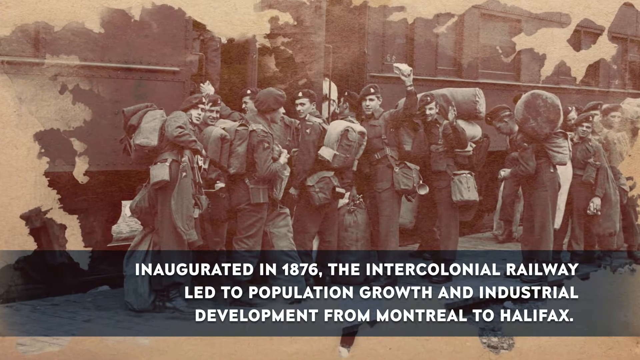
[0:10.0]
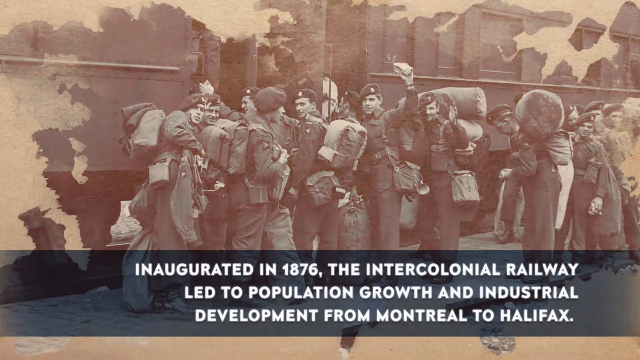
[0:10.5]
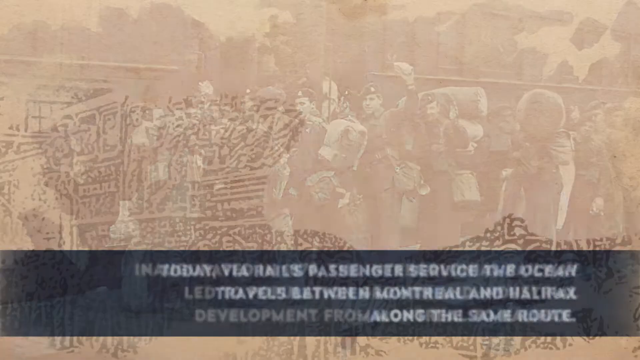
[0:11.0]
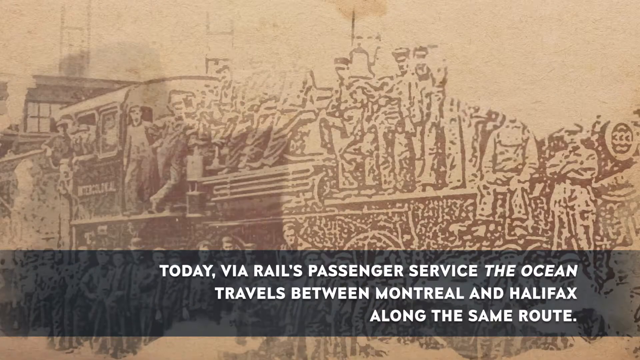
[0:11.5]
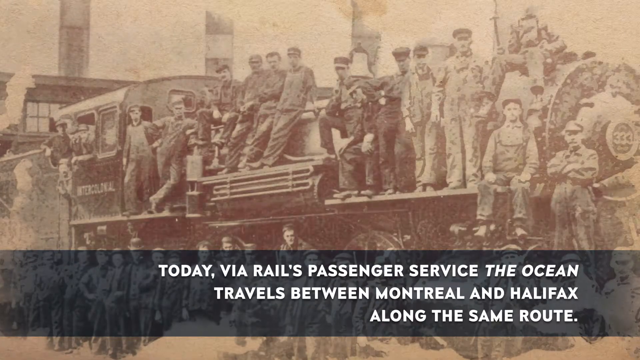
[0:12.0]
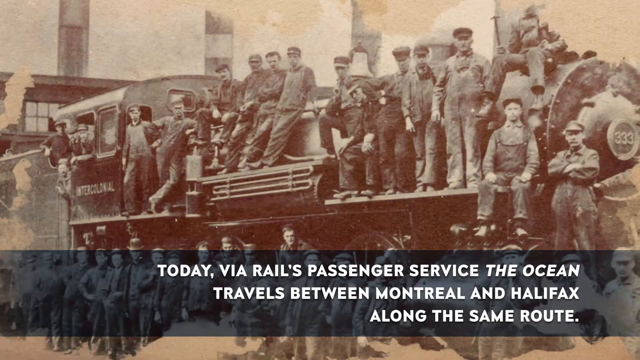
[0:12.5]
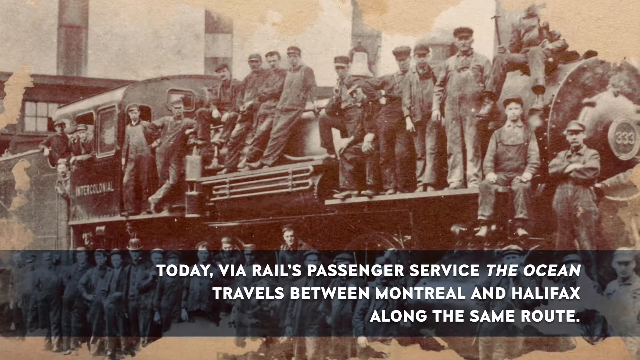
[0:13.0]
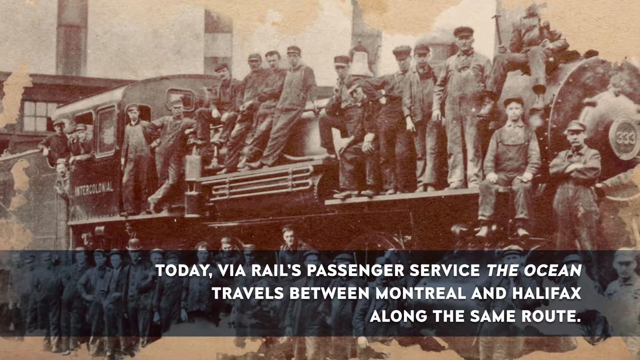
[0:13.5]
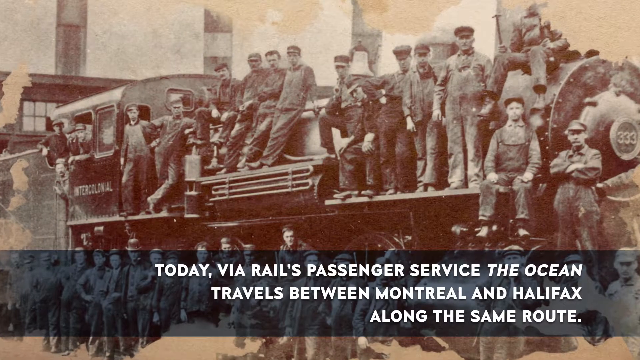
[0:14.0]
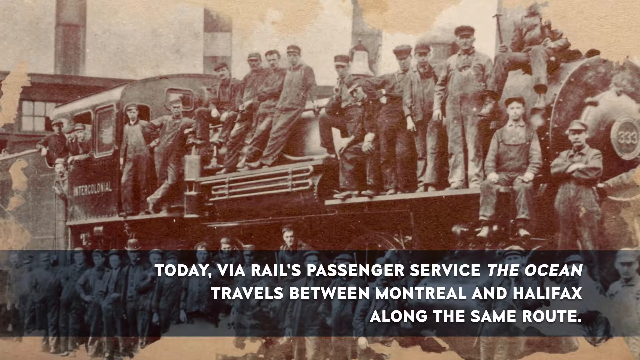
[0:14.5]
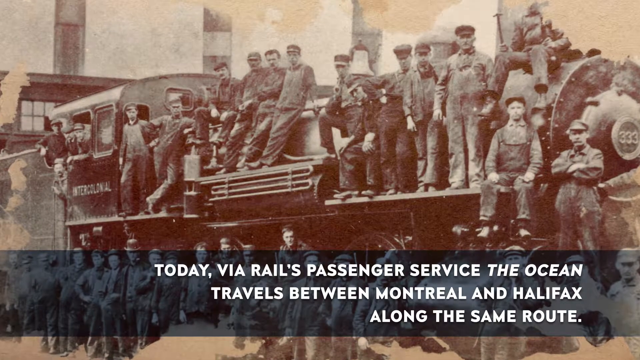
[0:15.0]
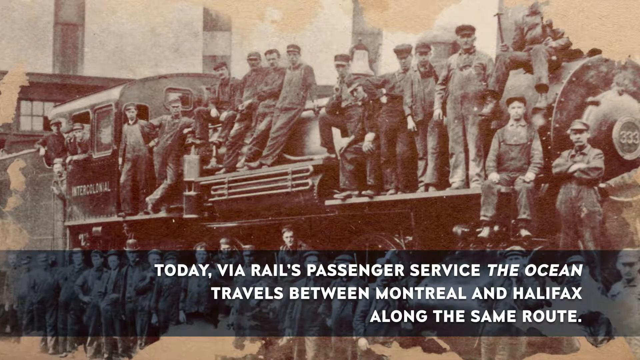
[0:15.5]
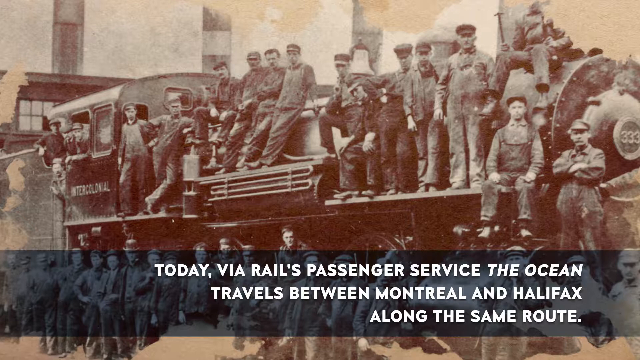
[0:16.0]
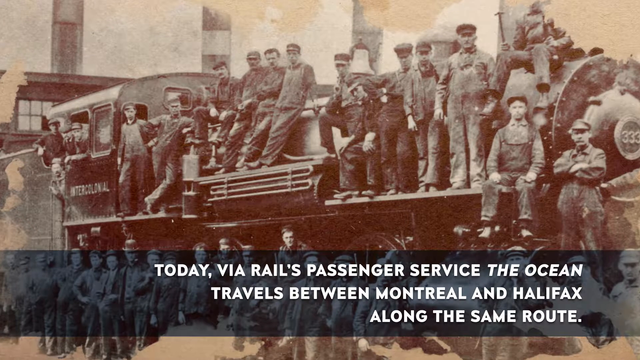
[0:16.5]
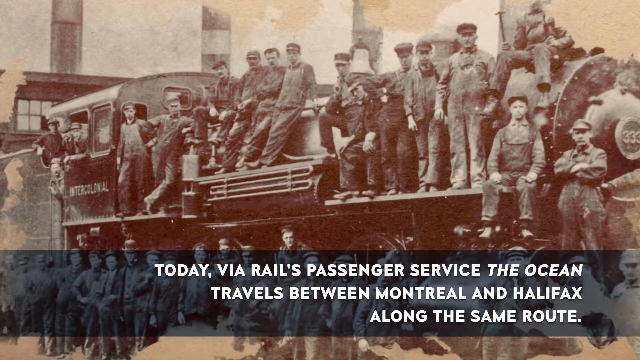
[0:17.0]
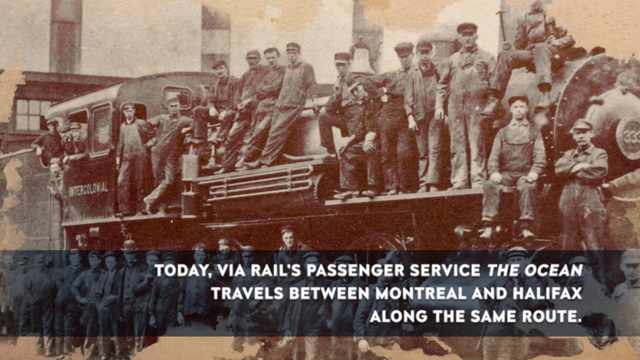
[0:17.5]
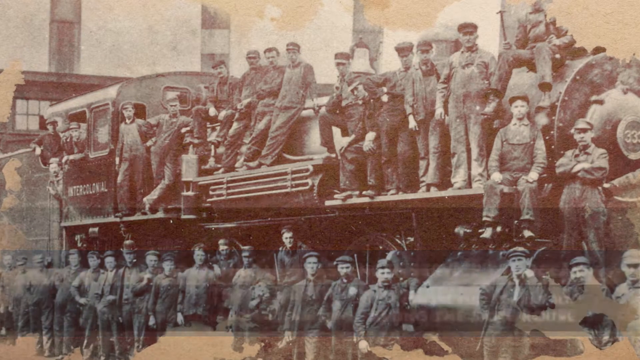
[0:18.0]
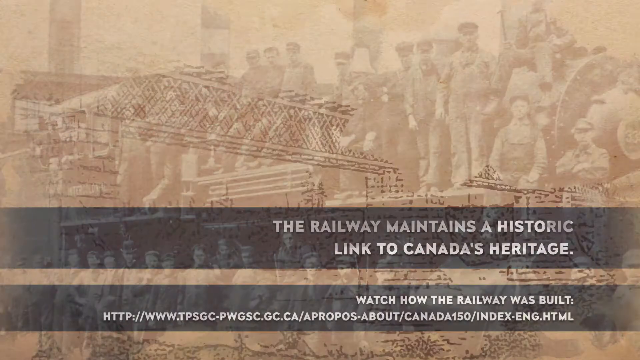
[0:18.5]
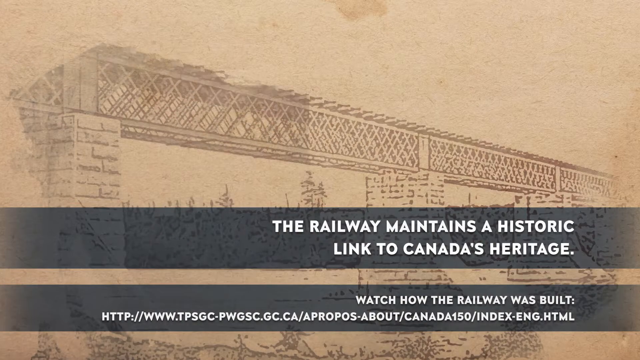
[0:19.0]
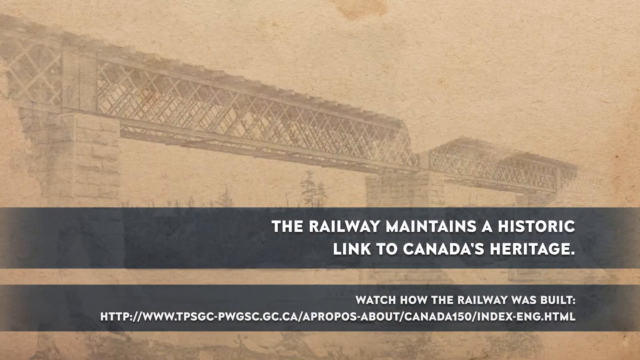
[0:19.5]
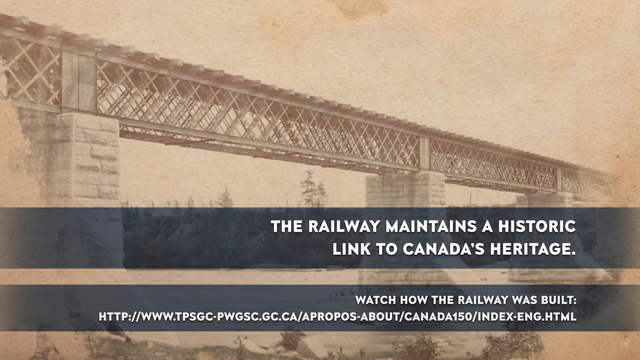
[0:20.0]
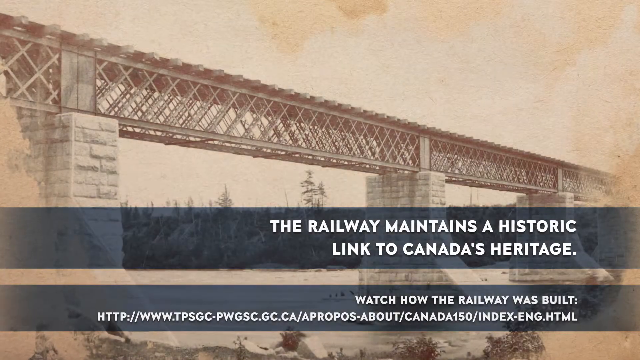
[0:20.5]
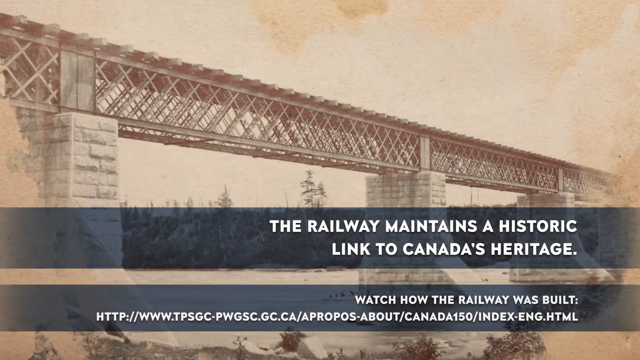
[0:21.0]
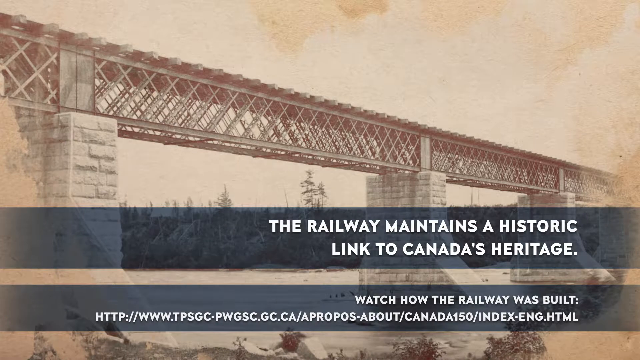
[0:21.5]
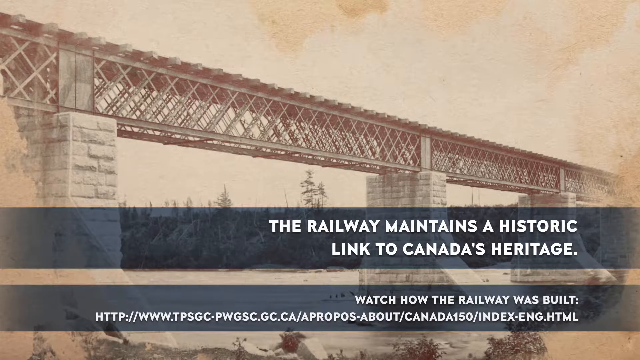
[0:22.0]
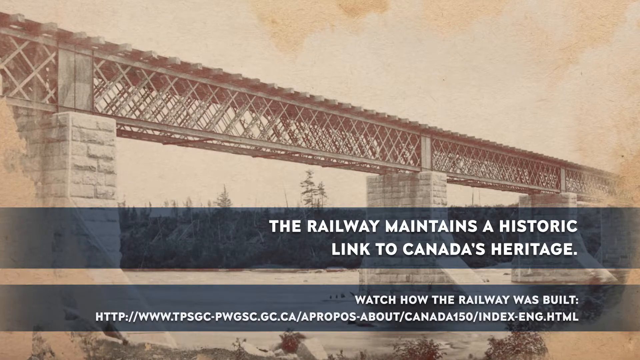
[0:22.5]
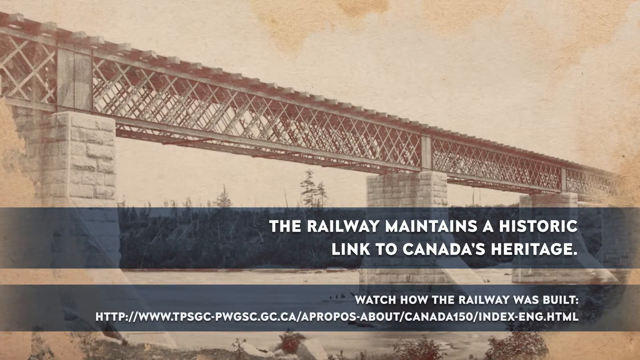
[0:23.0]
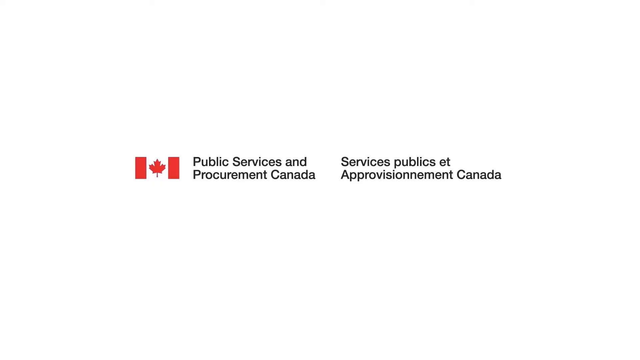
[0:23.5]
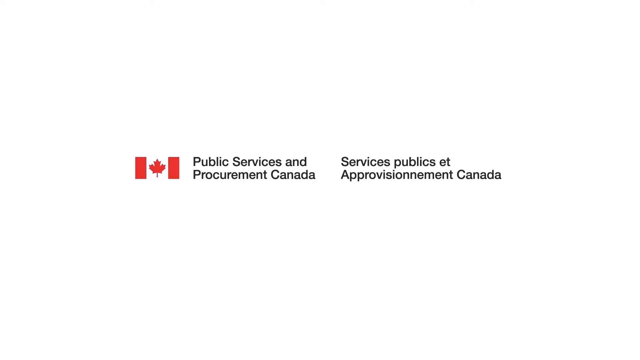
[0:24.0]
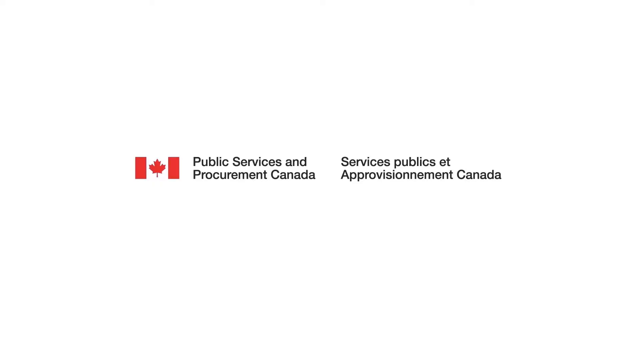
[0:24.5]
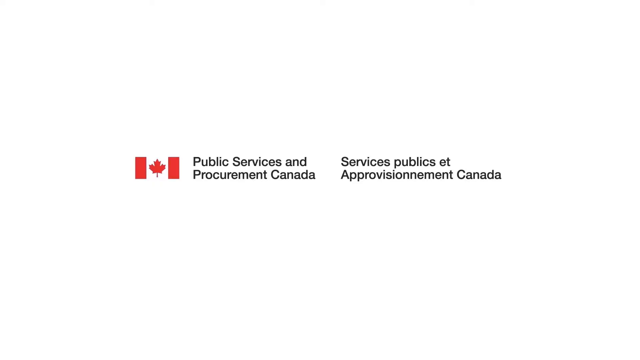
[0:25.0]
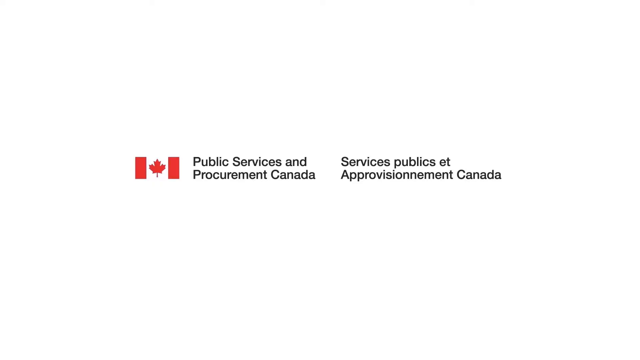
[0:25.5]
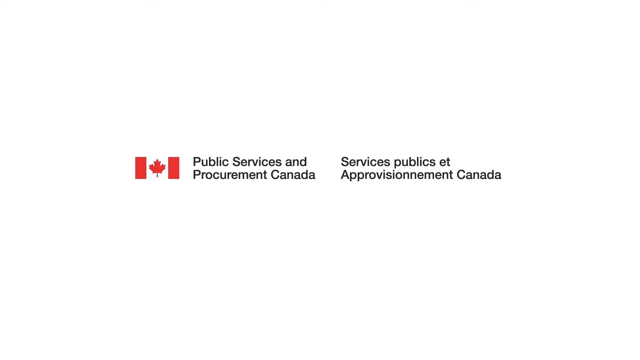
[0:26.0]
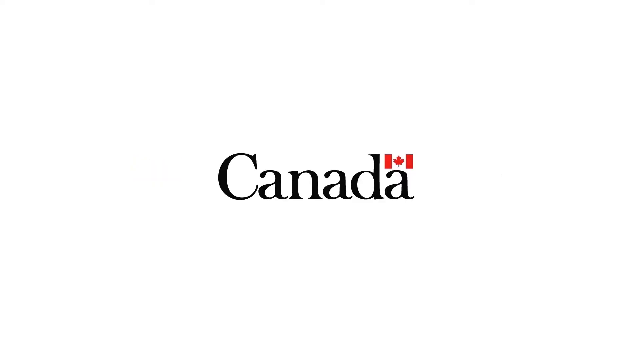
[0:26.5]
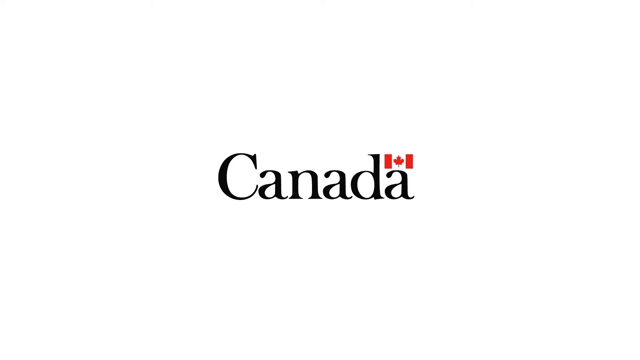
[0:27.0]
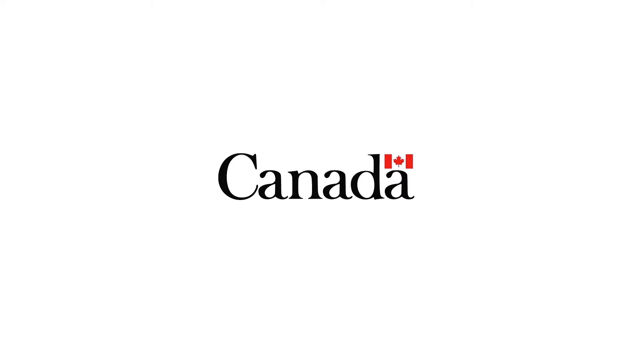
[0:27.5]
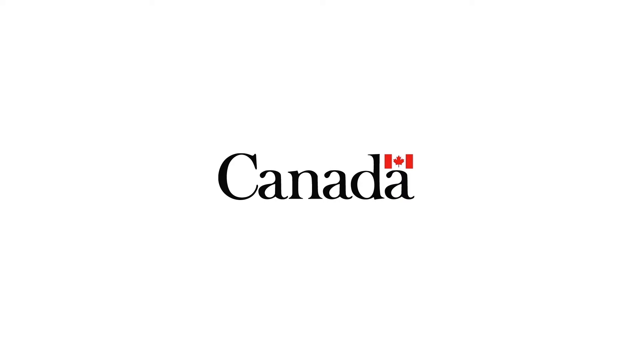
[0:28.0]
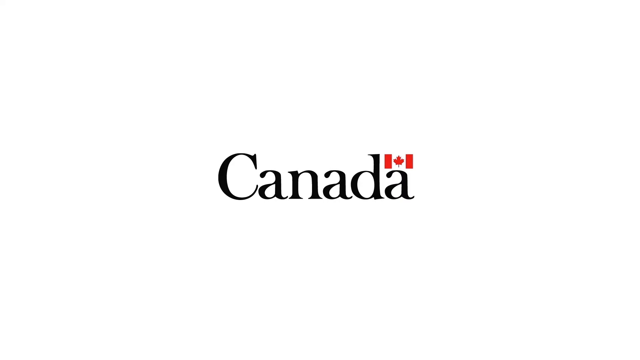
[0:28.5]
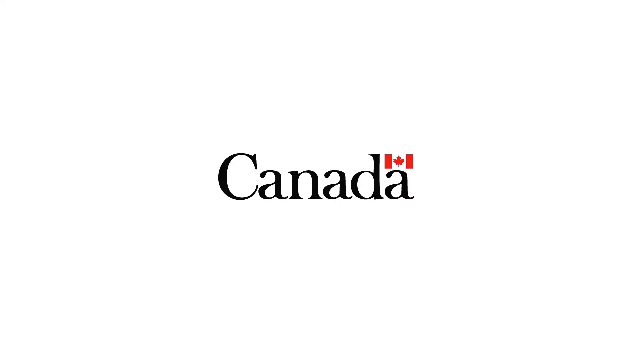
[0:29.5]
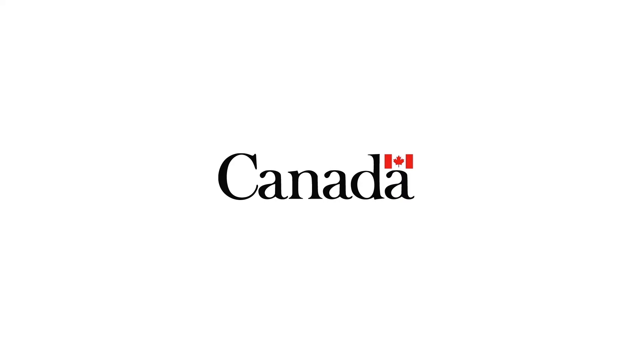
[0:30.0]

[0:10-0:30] A photo shows a large group of men traveling on top of a train car. Some are standing up and leaning on the sides, and some are sitting down on the edges where there is a small plank of wood. Other men are standing on the ground underneath the train car. The text "intercolonial" is visible on the train car's door, and the men are dressed in work uniforms. The next image shows a railroad going over a body of water, with two translucent grey banners. The top one says "the railway maintains a historic link to Canada's heritage," and the bottom one lists a website where one can watch how the railway was built. Large stabilization columns go into the water where the railroad meets it, and planks of wood run along the outside underneath the track in a criss-cross pattern.